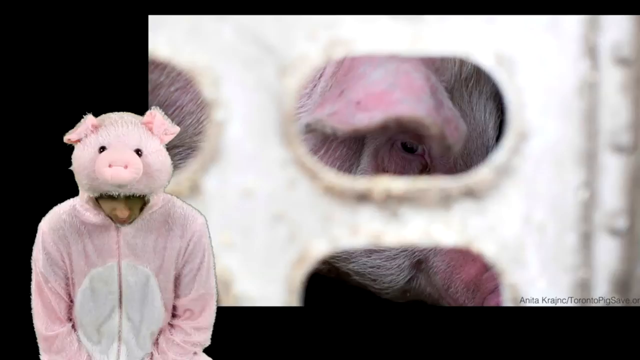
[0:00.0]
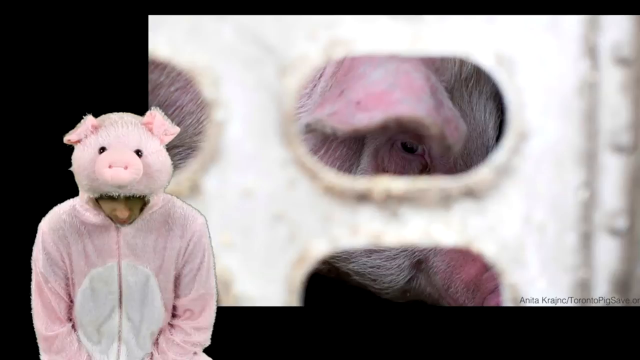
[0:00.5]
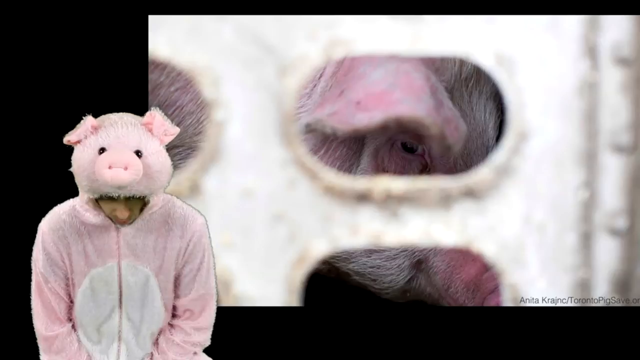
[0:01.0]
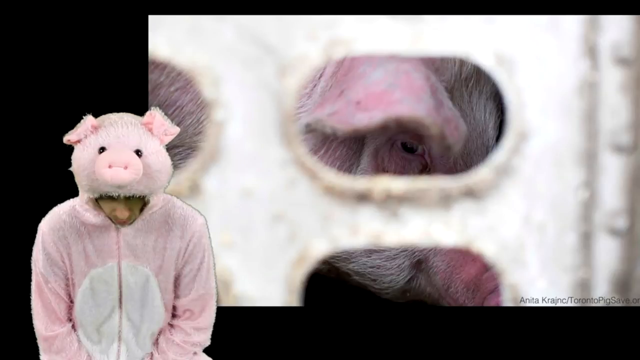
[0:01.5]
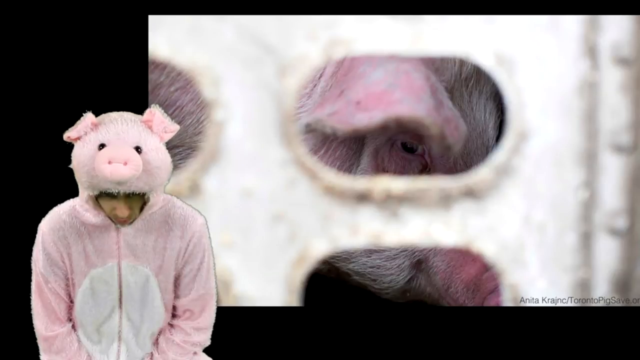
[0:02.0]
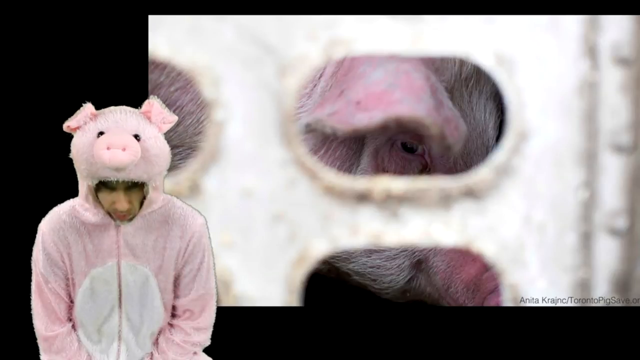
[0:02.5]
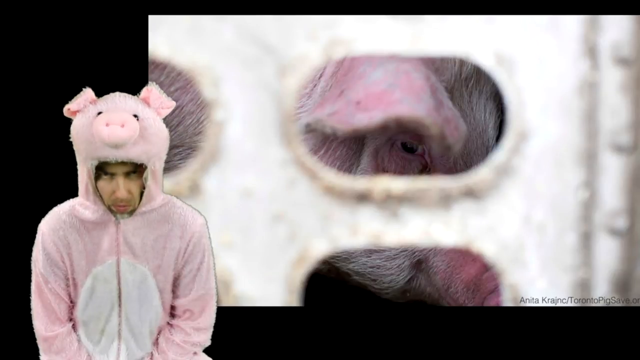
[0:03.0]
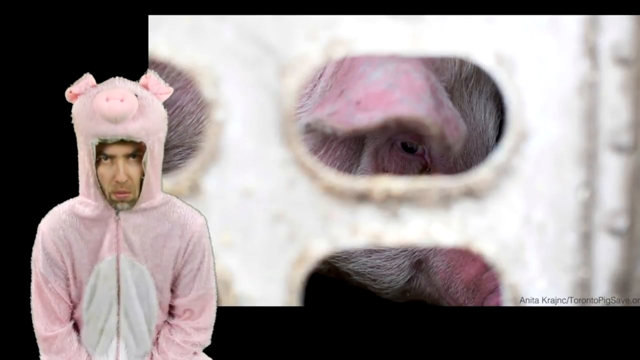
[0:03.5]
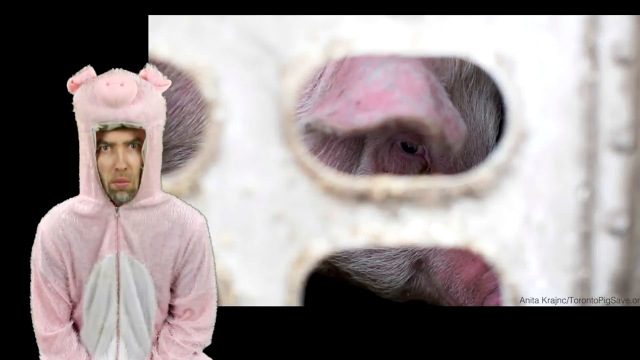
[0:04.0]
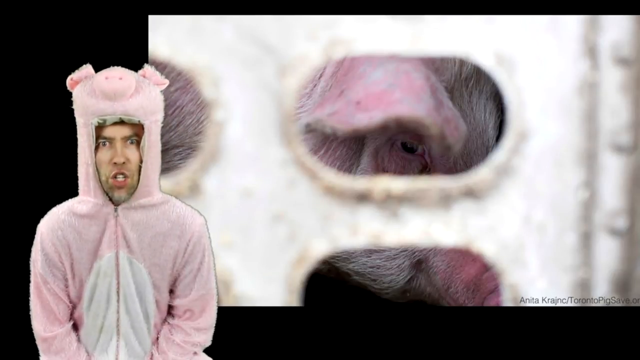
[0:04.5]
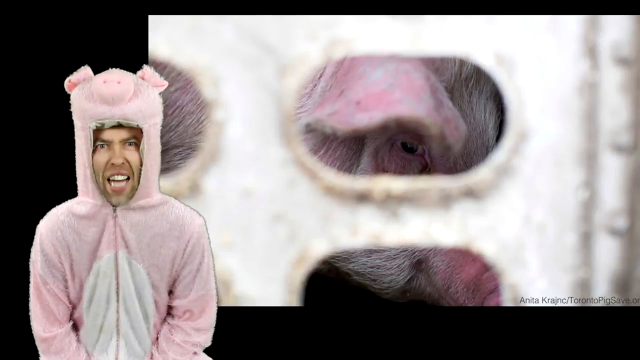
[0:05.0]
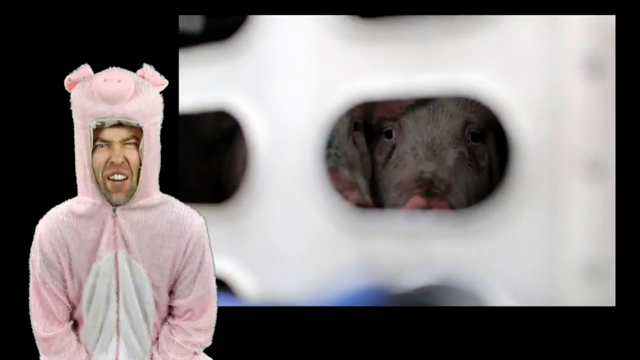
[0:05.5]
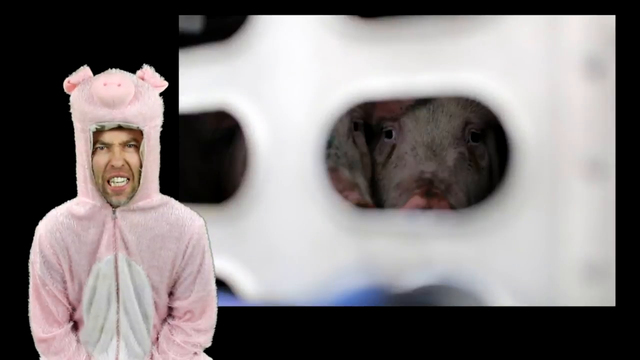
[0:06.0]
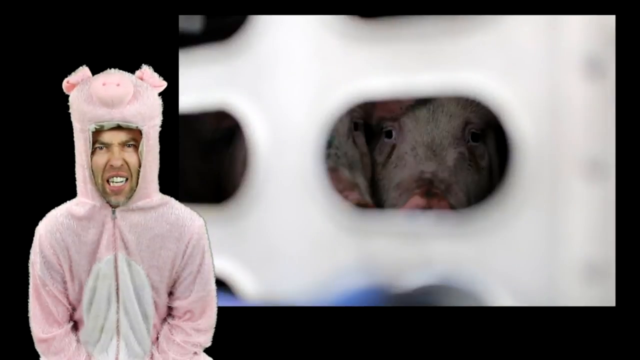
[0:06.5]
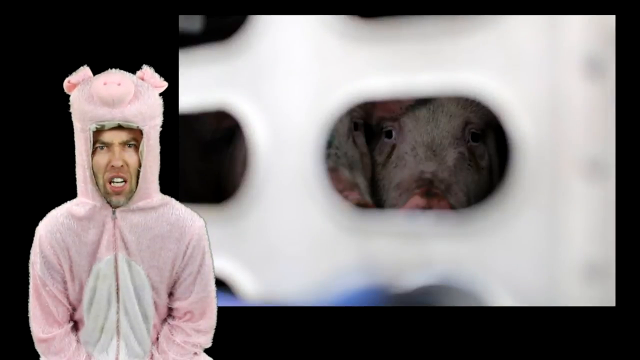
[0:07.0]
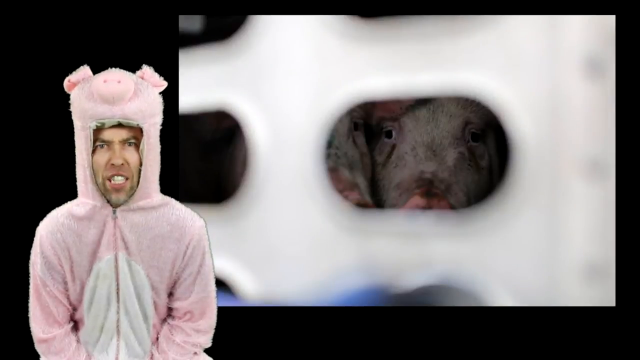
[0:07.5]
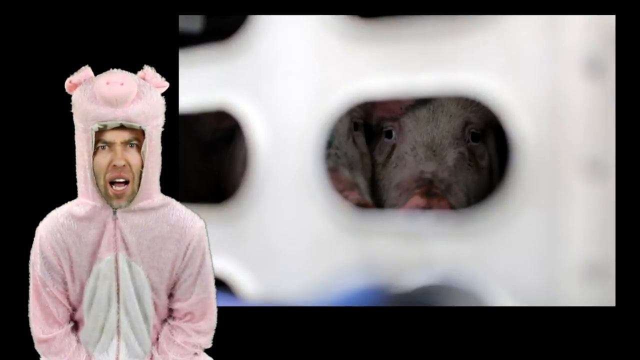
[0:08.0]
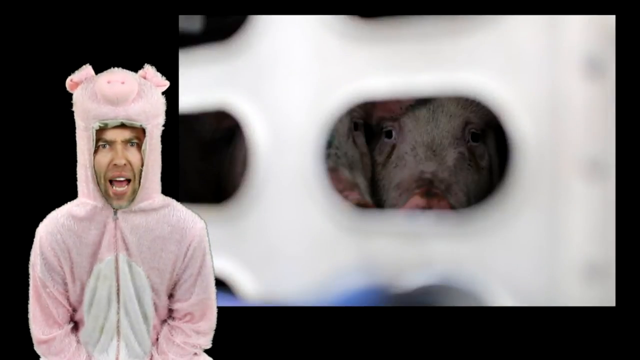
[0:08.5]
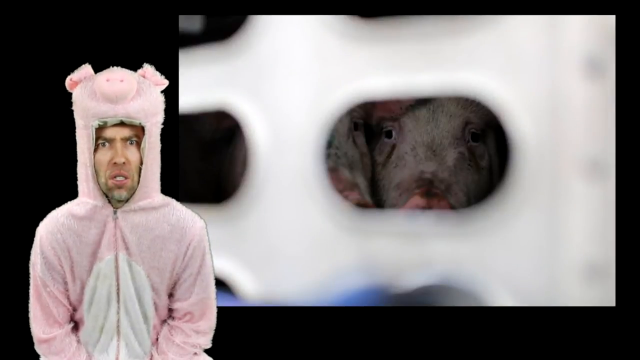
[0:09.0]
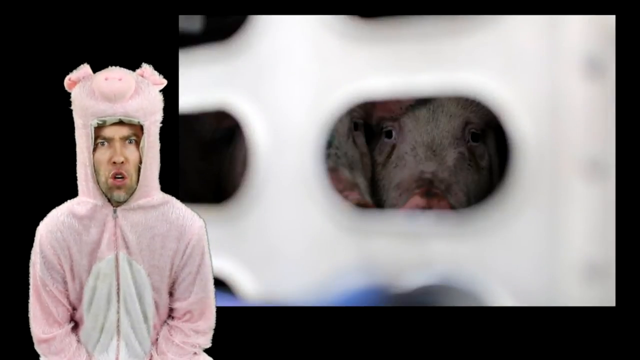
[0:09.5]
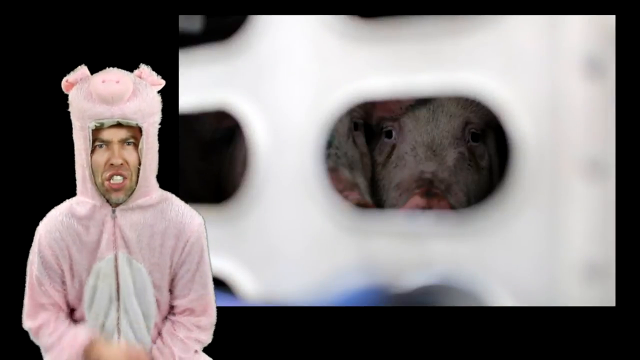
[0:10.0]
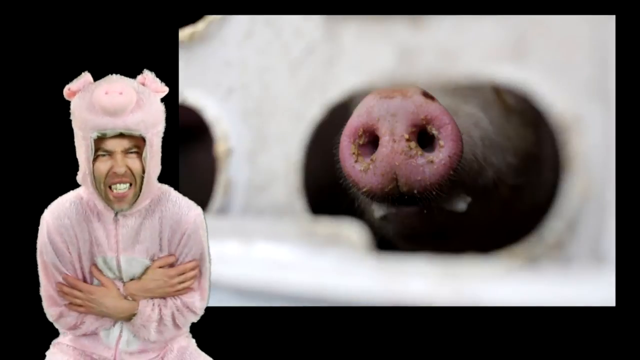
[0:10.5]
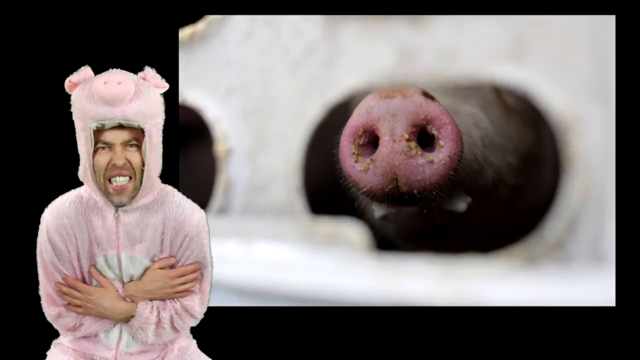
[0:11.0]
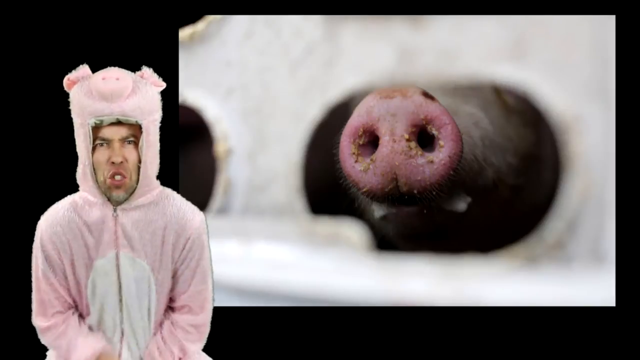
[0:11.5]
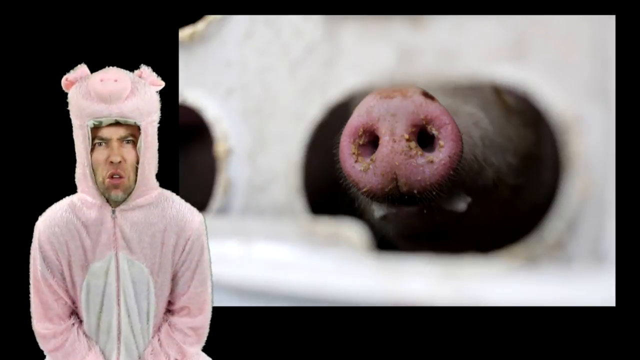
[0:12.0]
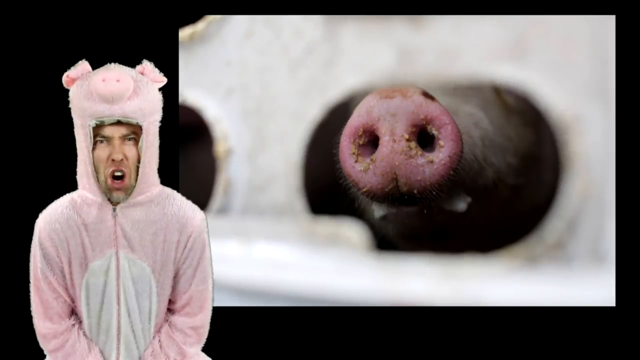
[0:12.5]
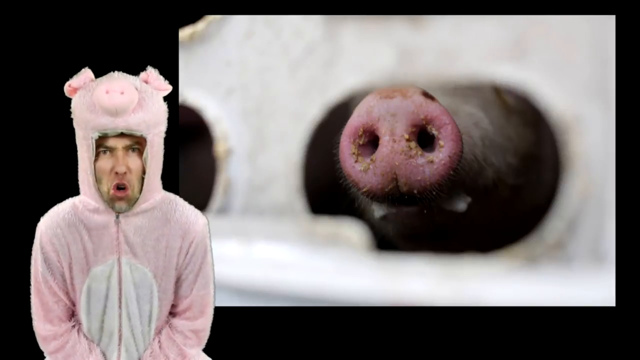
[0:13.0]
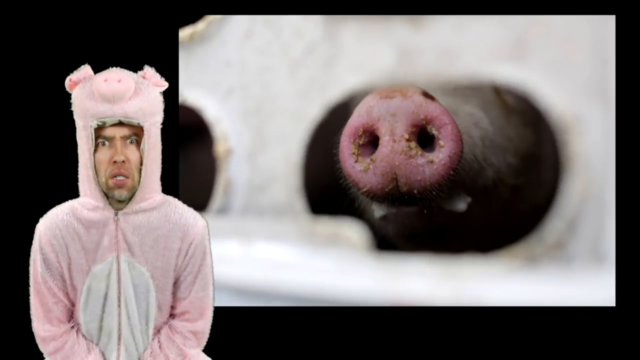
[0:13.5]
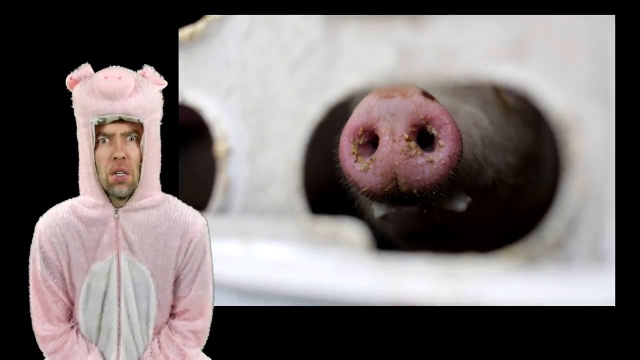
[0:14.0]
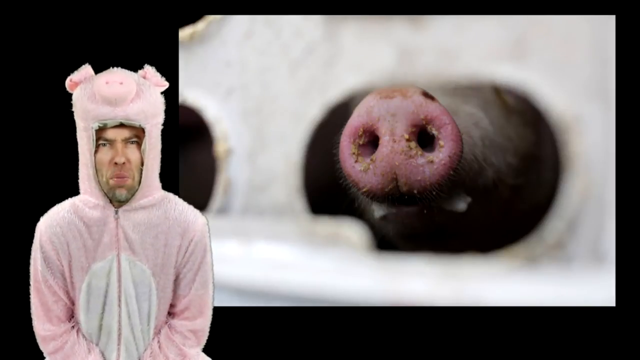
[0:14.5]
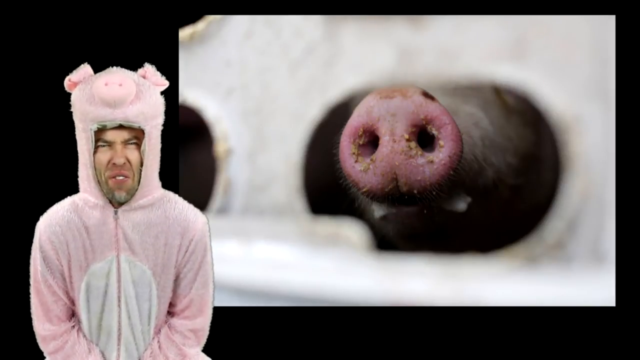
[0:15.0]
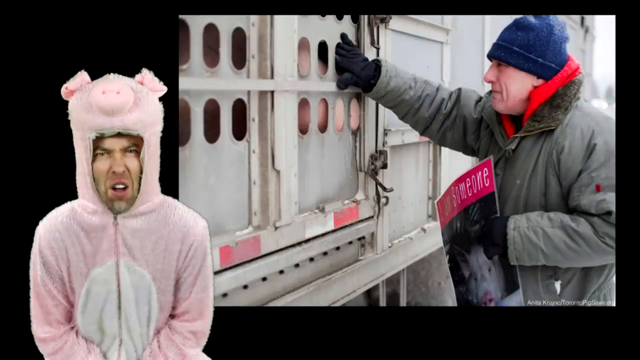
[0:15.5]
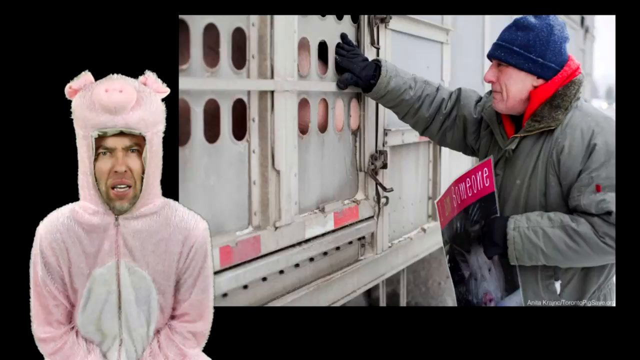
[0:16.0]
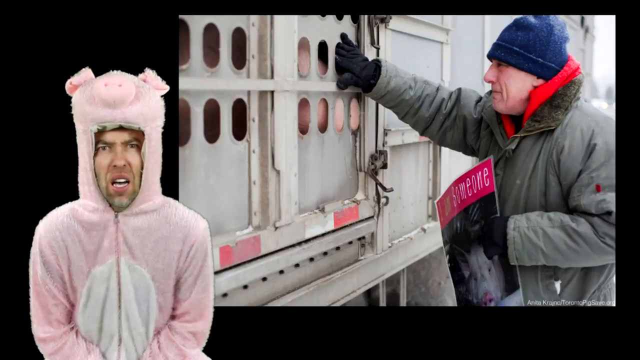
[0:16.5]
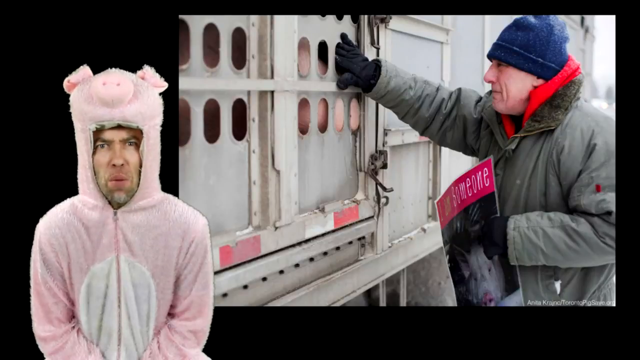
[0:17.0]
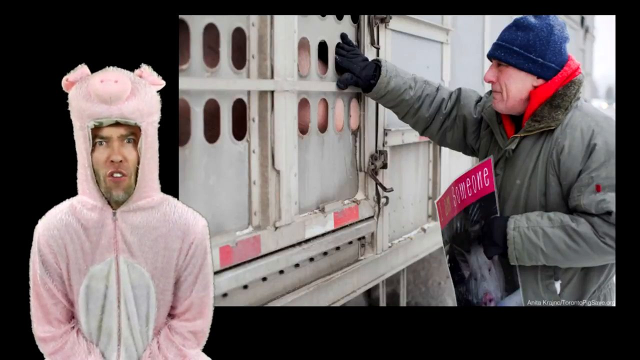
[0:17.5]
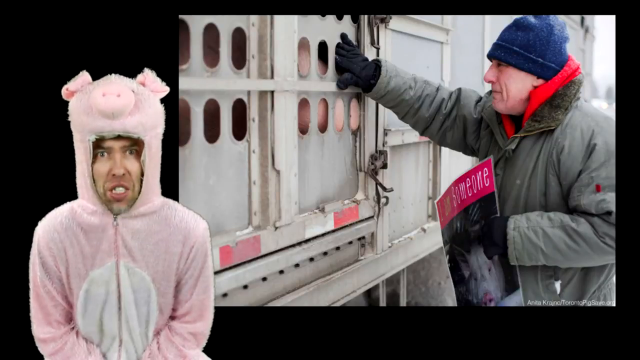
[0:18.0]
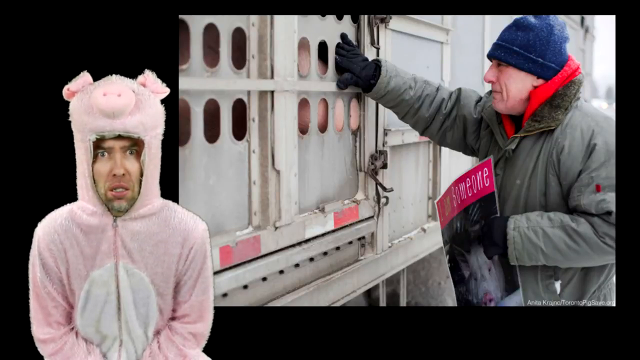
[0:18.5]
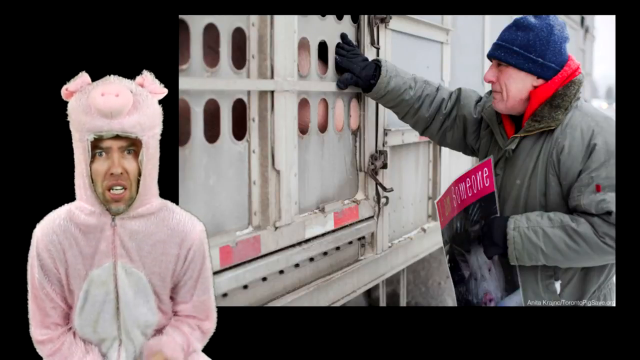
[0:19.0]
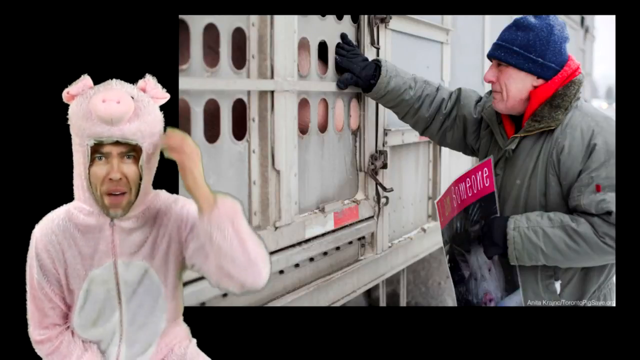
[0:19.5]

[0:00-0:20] A white man, apparently in his mid-thirties, wears a pink pig costume: it has a pig's snout, pig's ears, and a face that looks entirely like a pig, with two black eyes at the front. At first his head is bowed down; slowly he raises it and starts talking, squeezing his eyes and holding his hands together against his body. He looks angry as he talks. Then another video appears beside him, with the man sitting on the left-hand side of the screen. Beside him, the tiny eyes of pigs and their snouts show through a hole, and their mouths are visible too. A man in a red hoodie with a gray jacket on top, a blue cap and a black glove, holding what looks like a magazine, dips his hand into the hole where the pigs' snouts are. The man in the pig costume then puts his hand toward the costume, trying to pull it back.